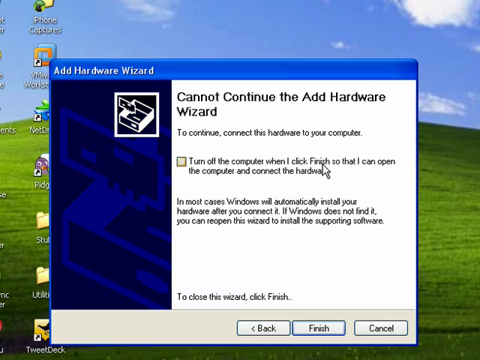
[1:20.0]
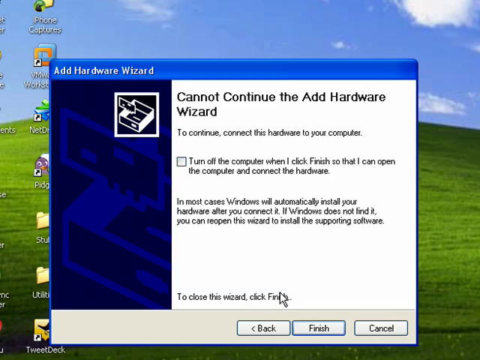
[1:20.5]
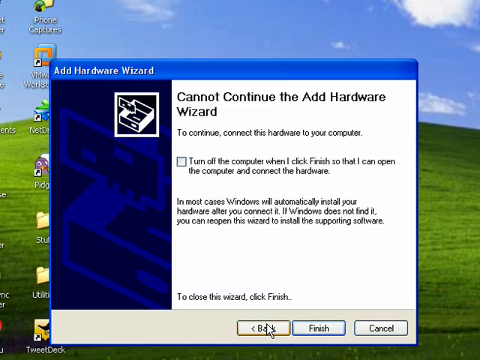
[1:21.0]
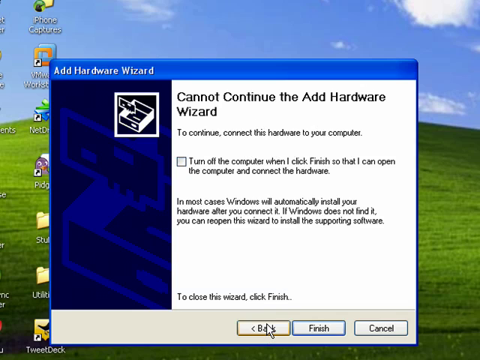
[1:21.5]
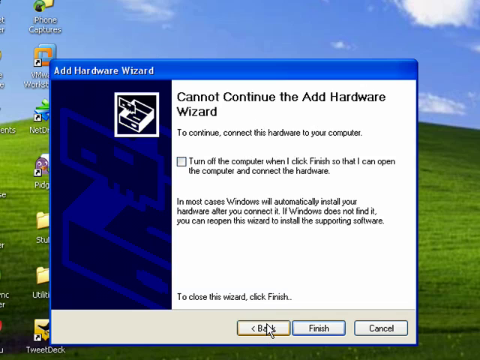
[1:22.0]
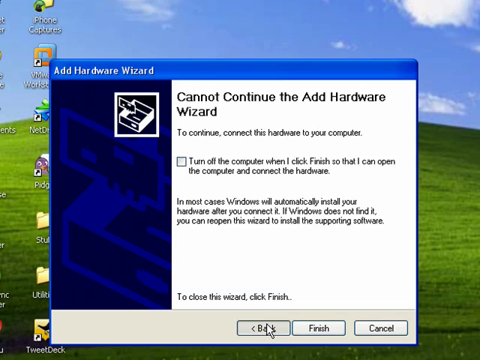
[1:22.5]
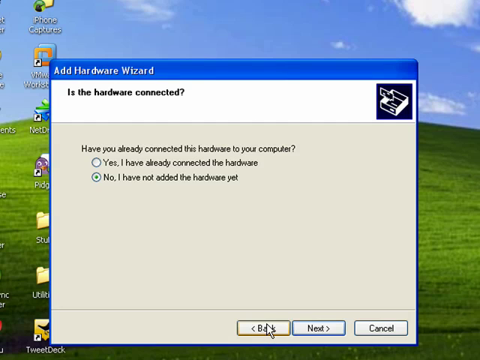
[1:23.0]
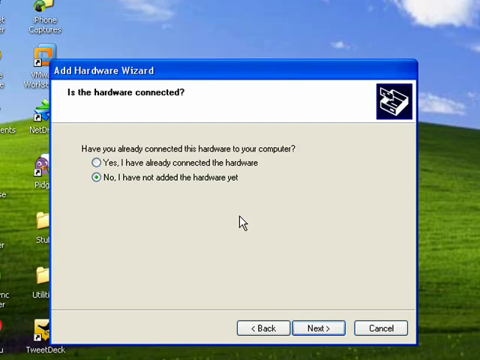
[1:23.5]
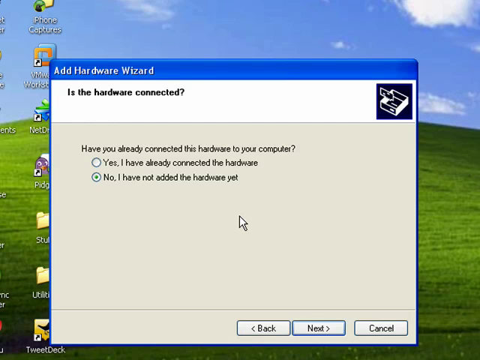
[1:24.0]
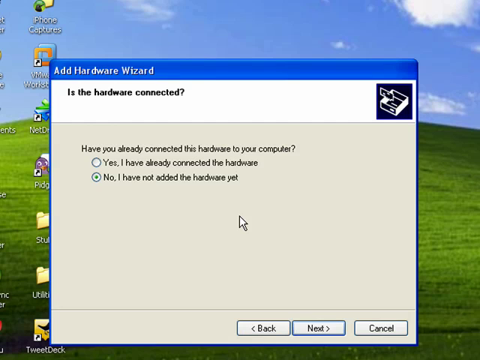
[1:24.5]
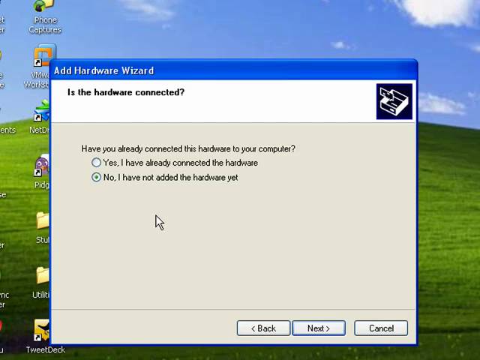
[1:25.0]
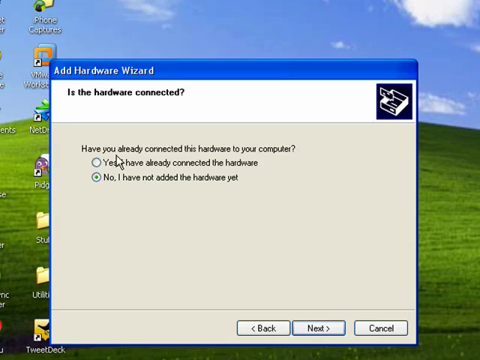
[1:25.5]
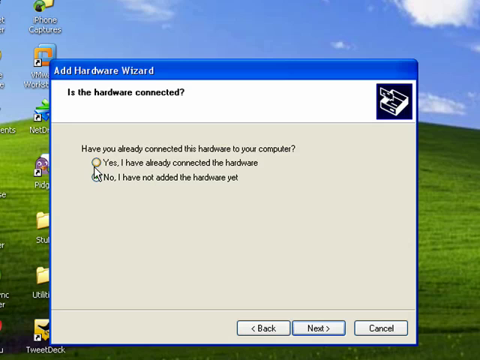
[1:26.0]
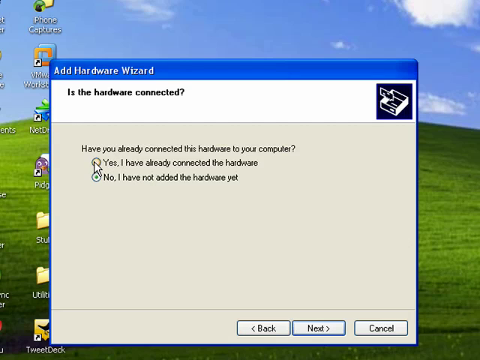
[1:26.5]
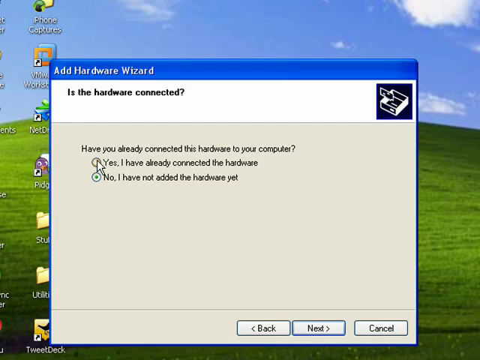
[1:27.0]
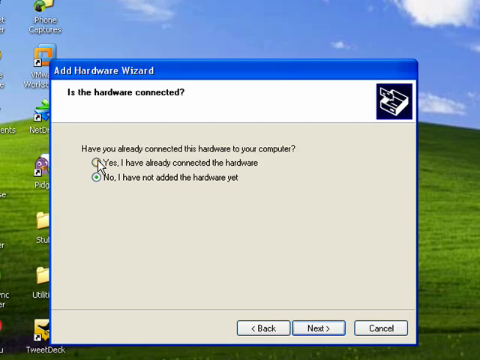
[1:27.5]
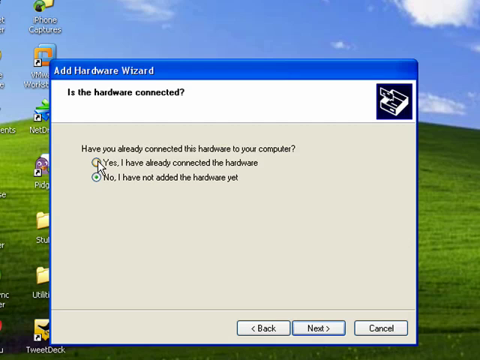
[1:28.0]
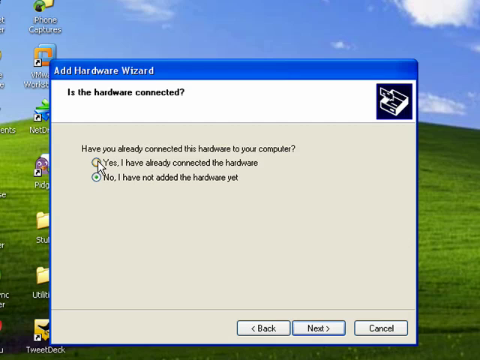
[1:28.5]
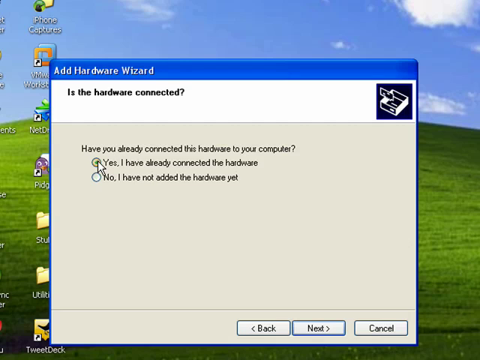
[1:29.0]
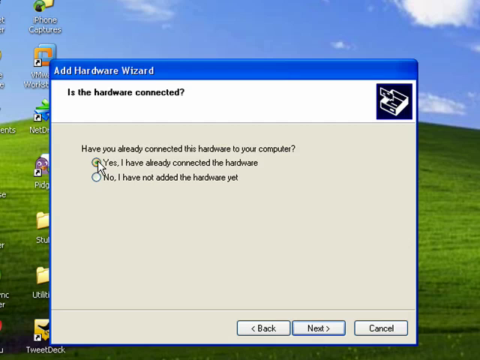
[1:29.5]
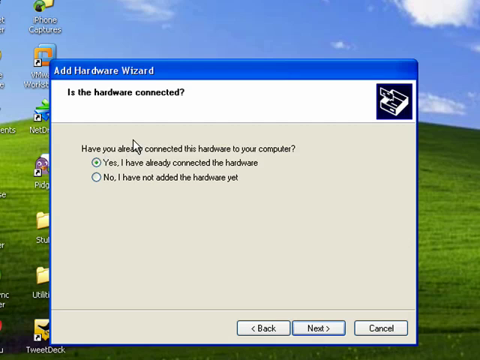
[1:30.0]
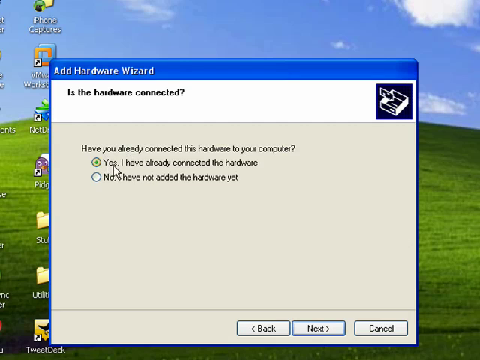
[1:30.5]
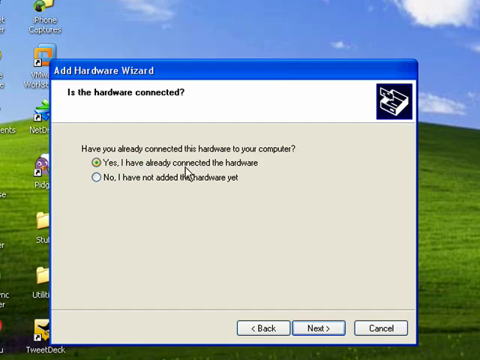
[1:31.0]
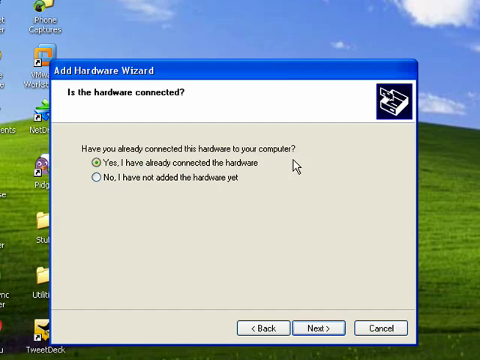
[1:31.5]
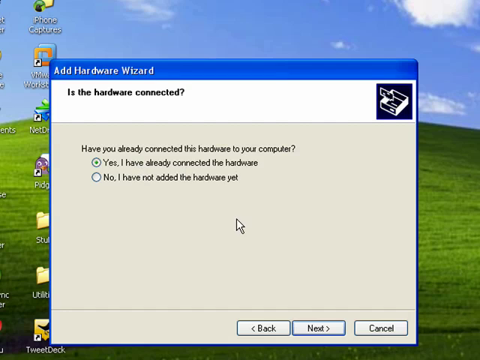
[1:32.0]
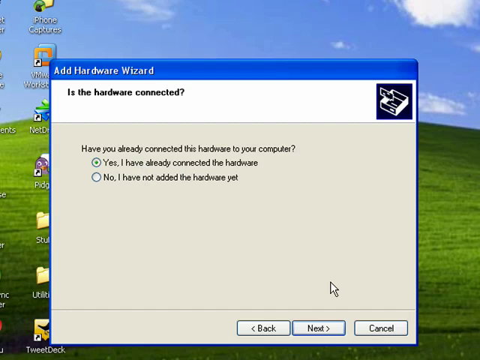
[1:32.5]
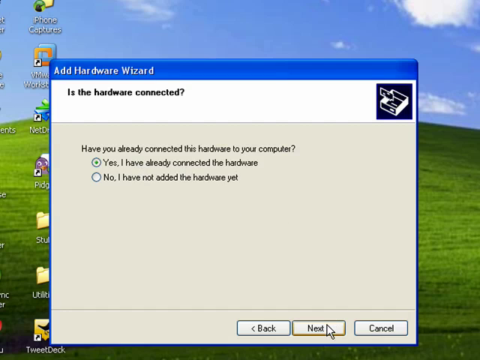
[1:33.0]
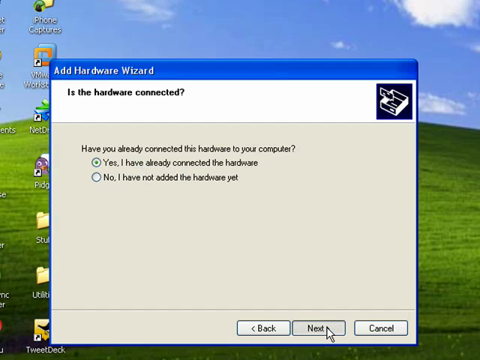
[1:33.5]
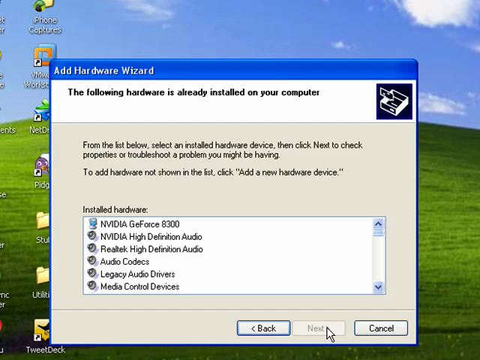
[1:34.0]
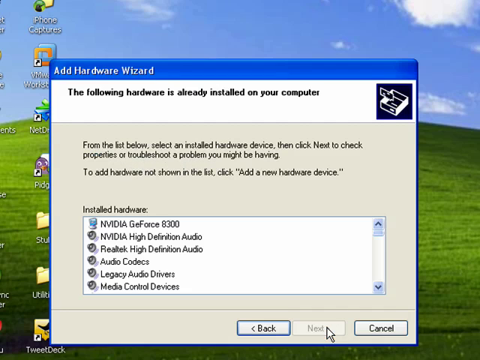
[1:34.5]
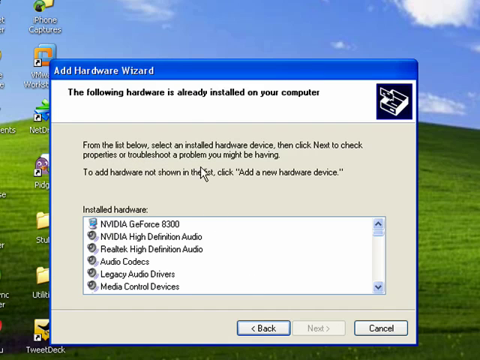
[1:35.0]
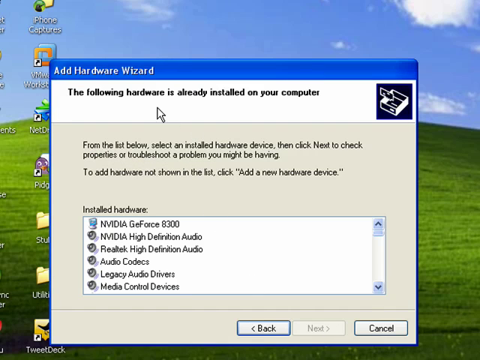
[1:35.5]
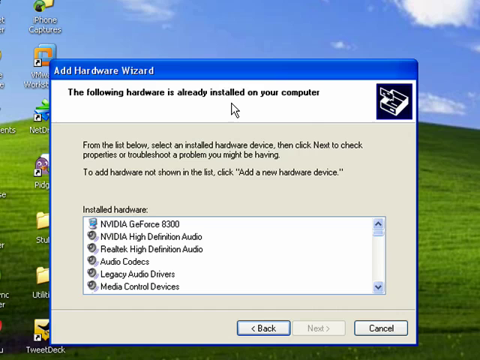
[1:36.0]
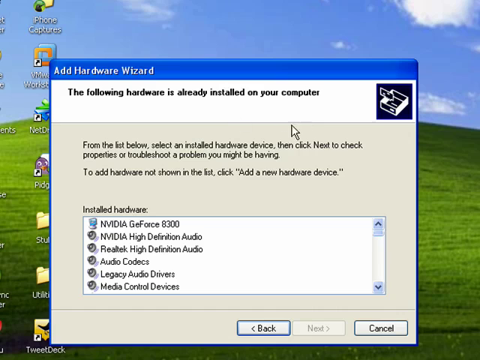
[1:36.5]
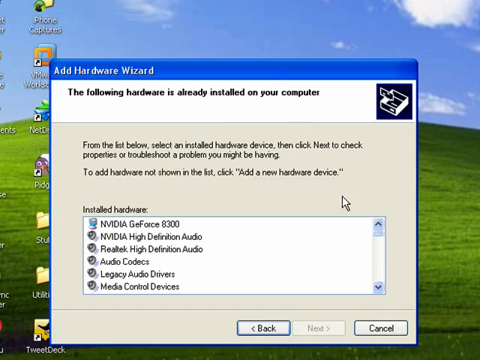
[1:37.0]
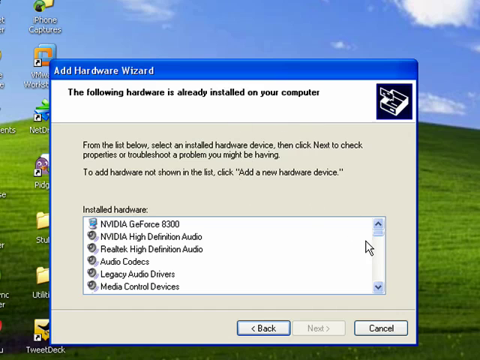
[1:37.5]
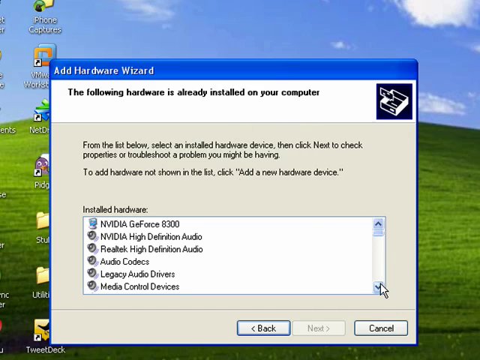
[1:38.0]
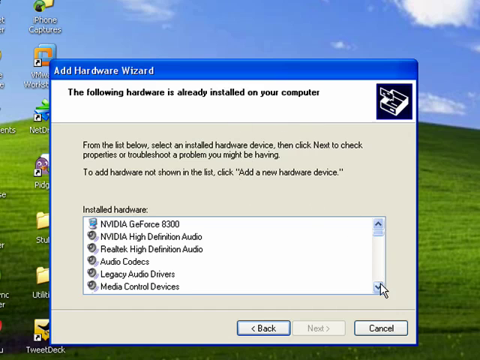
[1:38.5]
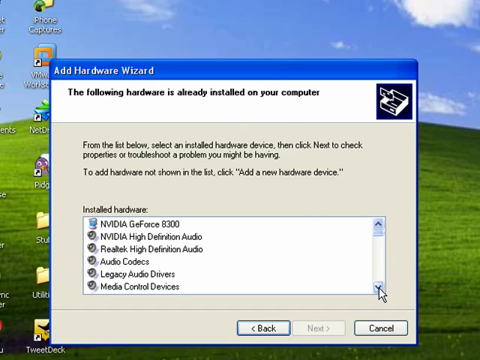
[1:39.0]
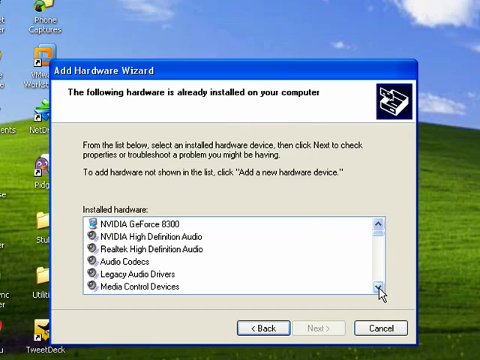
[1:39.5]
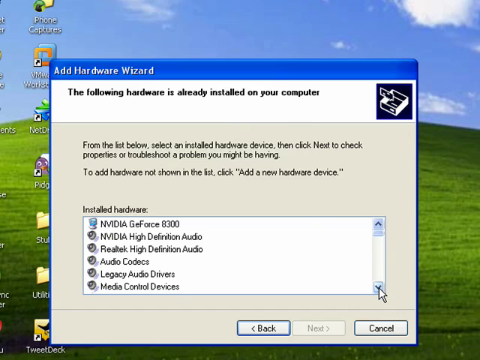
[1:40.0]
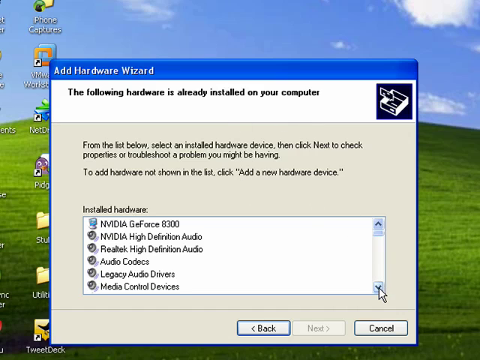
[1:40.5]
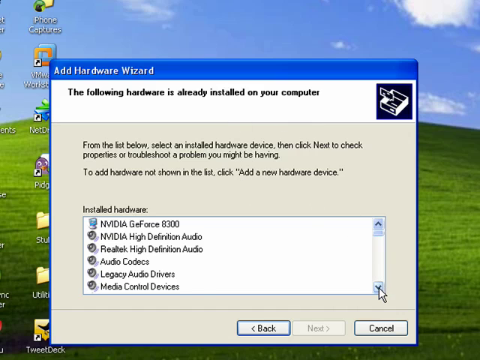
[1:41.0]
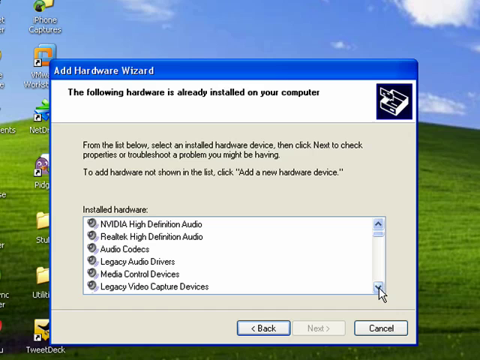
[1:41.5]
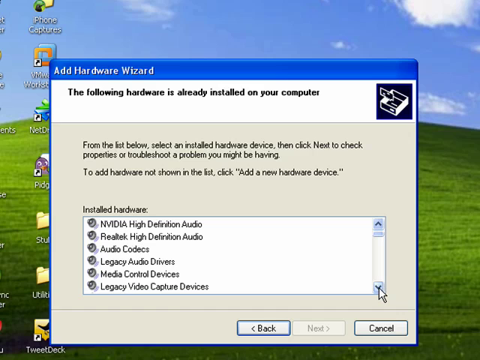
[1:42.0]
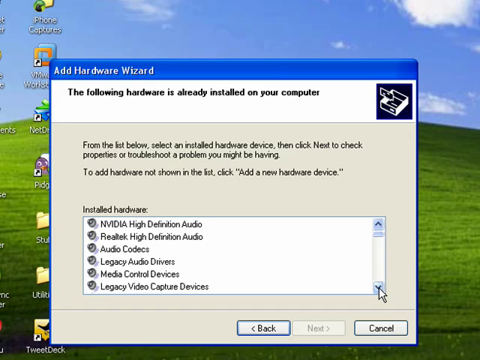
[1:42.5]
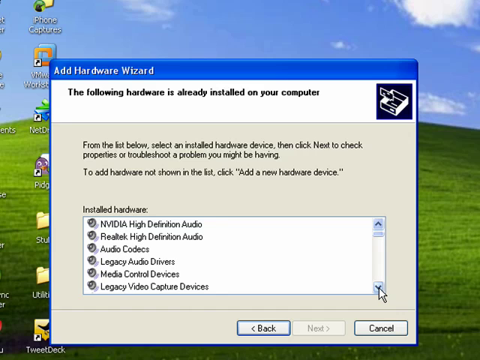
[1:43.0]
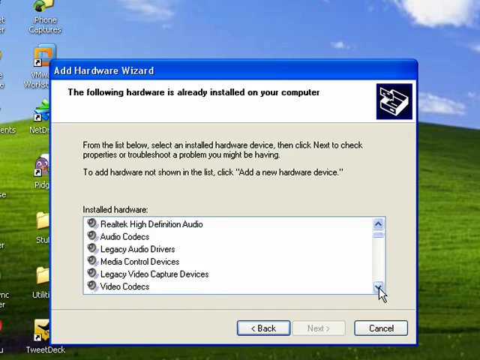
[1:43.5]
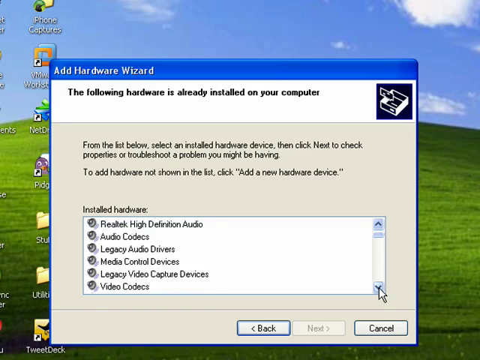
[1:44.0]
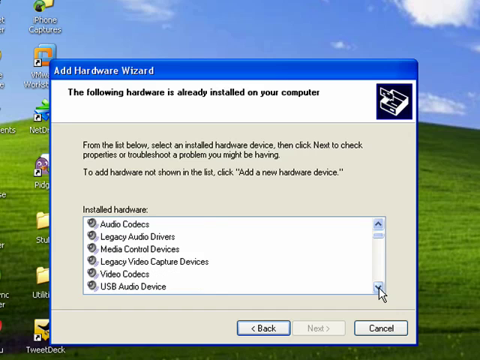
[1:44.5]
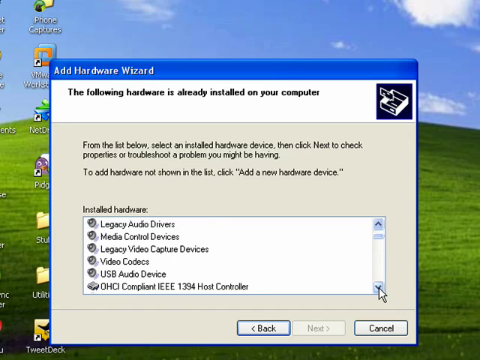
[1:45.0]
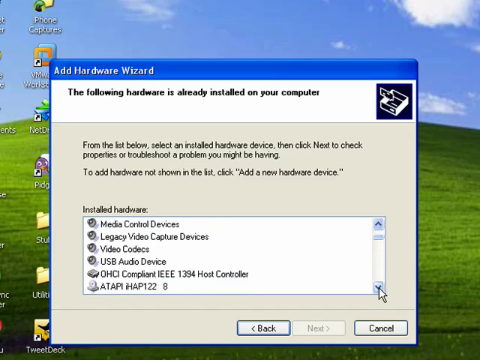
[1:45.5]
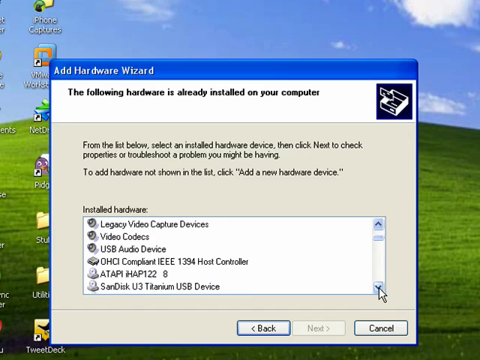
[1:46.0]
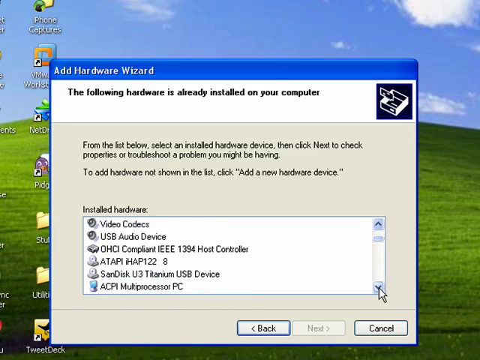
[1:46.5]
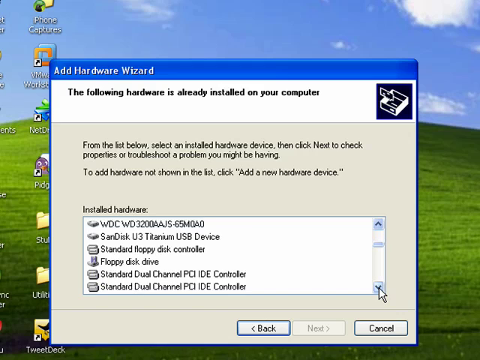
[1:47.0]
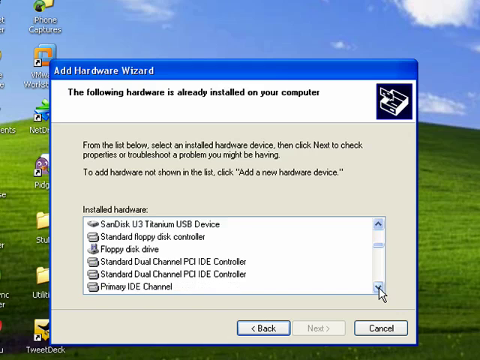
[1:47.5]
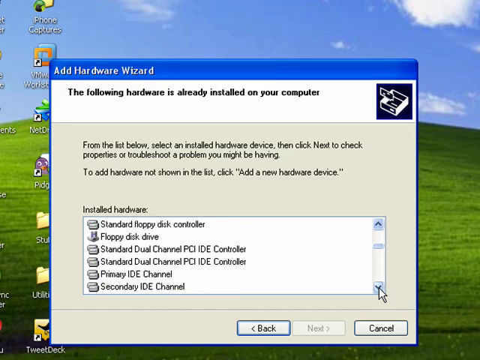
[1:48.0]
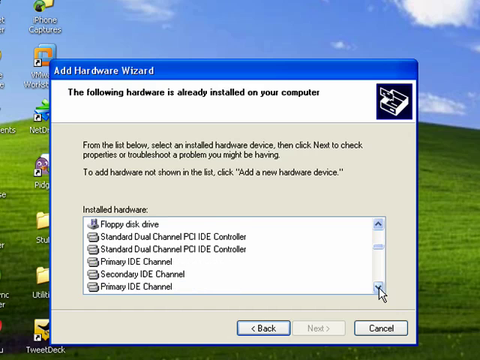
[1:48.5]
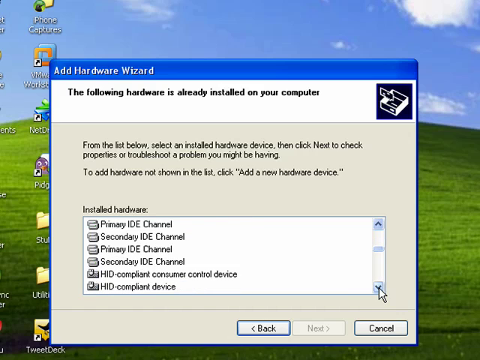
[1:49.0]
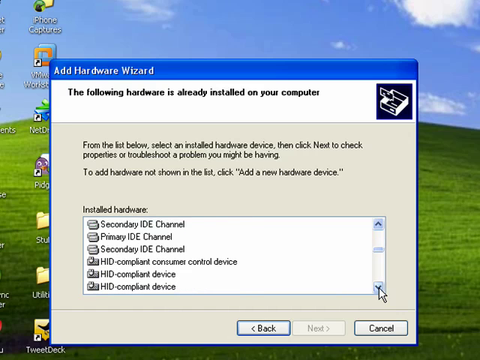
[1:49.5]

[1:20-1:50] A computer screen with a large green hill shows the add hardware wizard. It is on the page that says "is the hardware connected?" The person controlling the cursor selects yes and clicks next. The text reads "the following hardware is already installed on your computer." They use a drop-down arrow showing all different selections, clicking the arrow very slowly as they look for their selection and read everything that goes by. A pop-up appears reading "cannot continue the add hardware wizard," with "to continue, connect this hardware to your computer." There is a box reading "turn off the computer when I click finish, so I can open the computer and connect the hardware." It also says "in most cases, Windows will automatically install your hardware after you connect." At the bottom it says "to close this wizard, click finish," and there is a finish button, along with next and cancel buttons. The question "Have you already connected the hardware to your computer?" appears; someone selects yes and then clicks next.